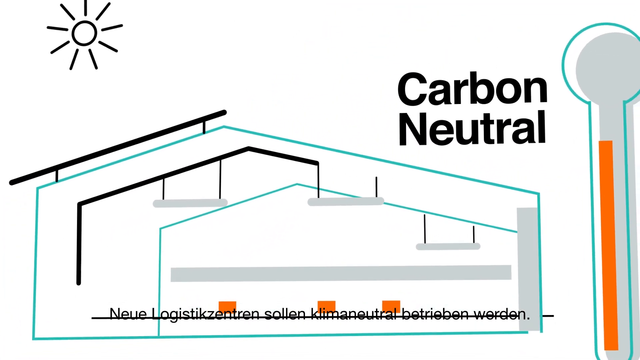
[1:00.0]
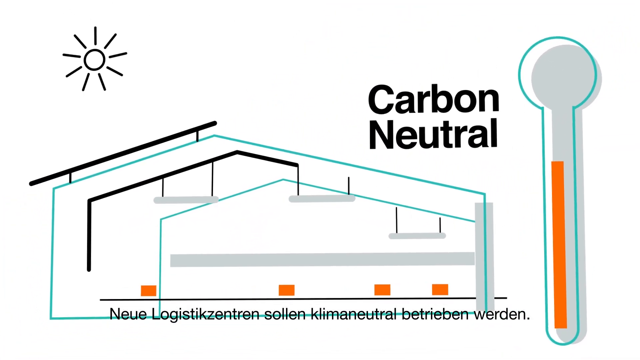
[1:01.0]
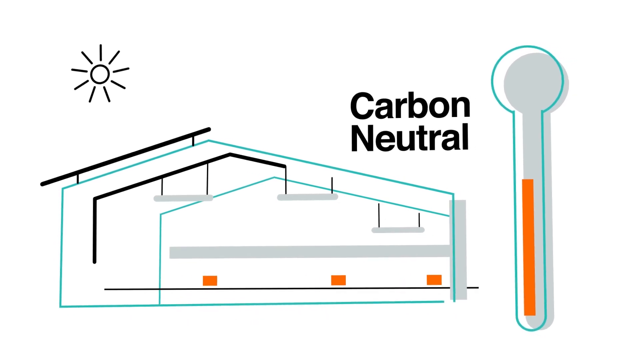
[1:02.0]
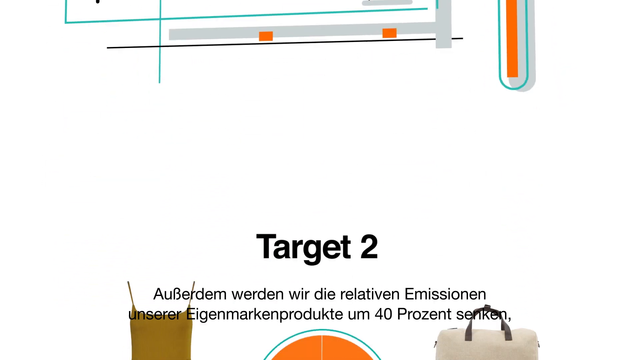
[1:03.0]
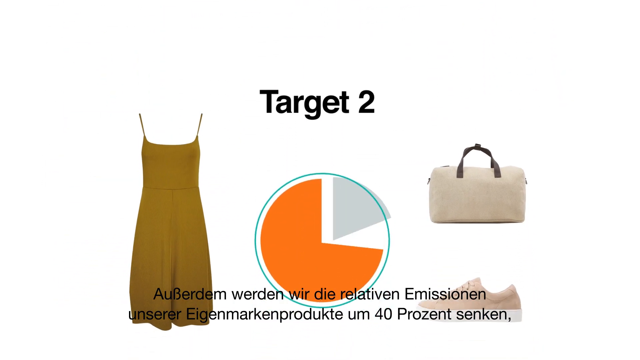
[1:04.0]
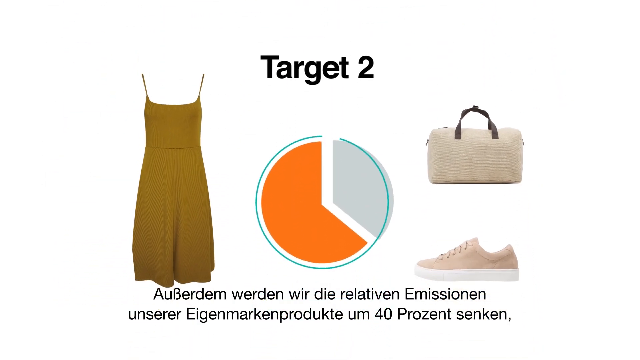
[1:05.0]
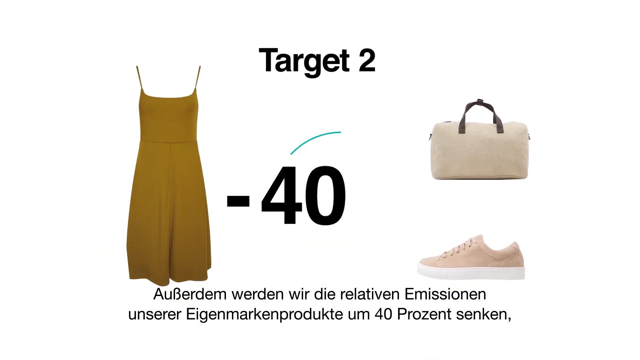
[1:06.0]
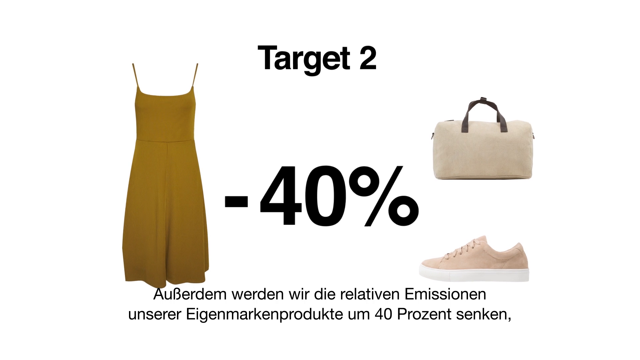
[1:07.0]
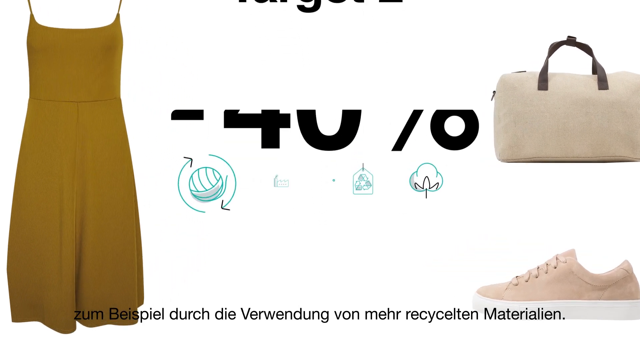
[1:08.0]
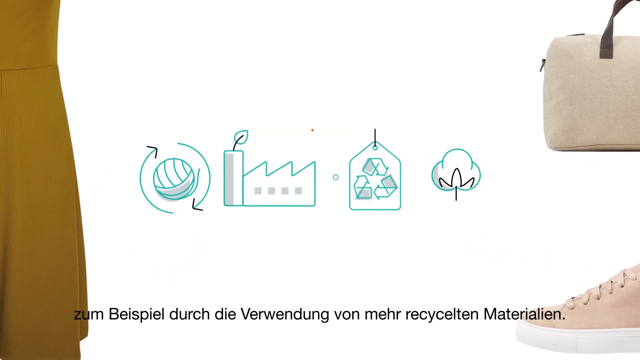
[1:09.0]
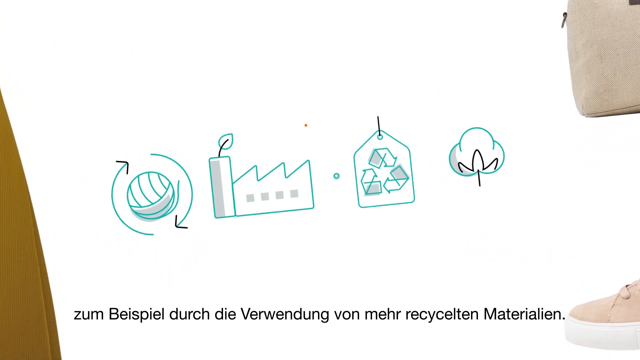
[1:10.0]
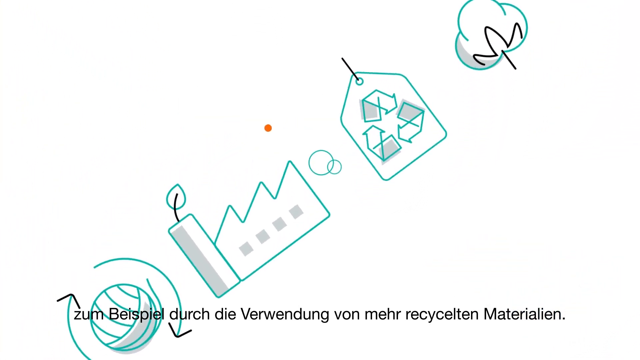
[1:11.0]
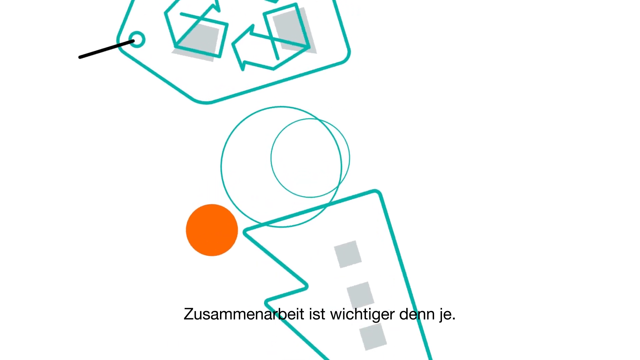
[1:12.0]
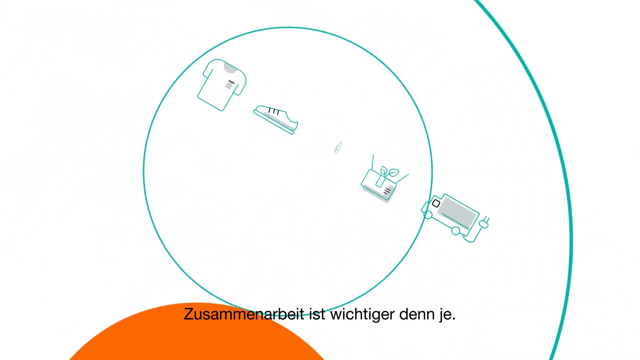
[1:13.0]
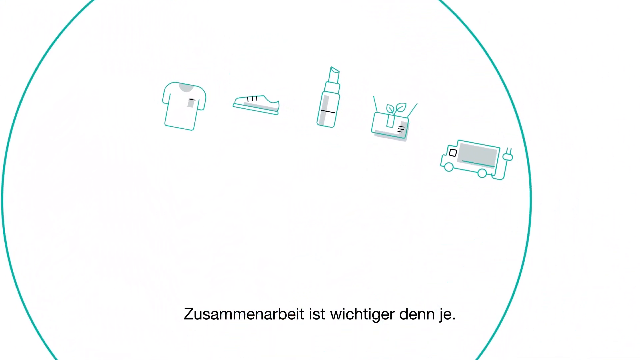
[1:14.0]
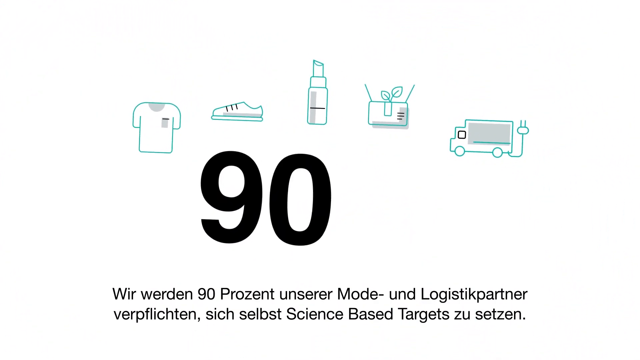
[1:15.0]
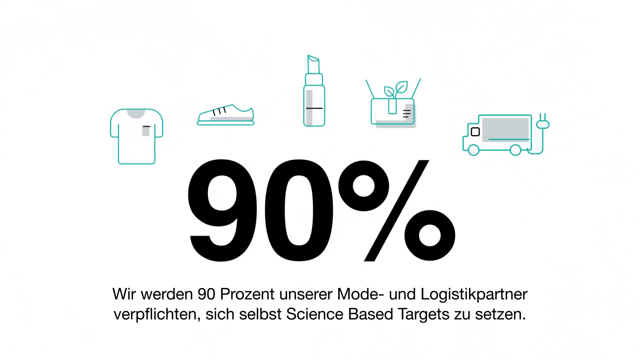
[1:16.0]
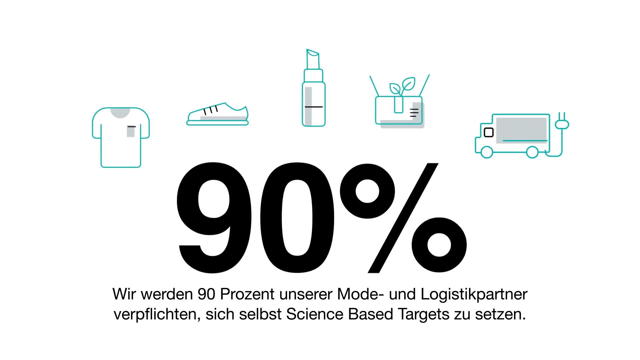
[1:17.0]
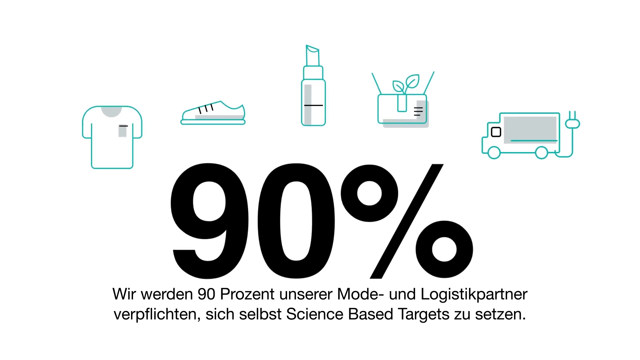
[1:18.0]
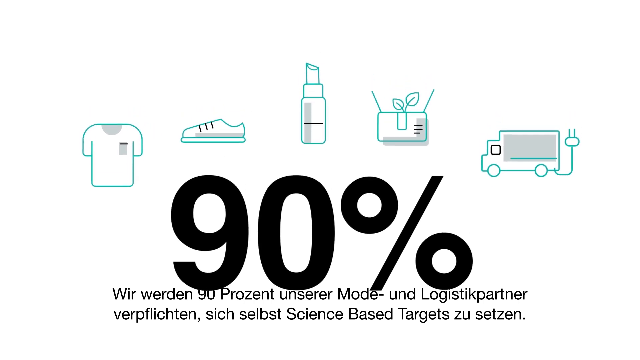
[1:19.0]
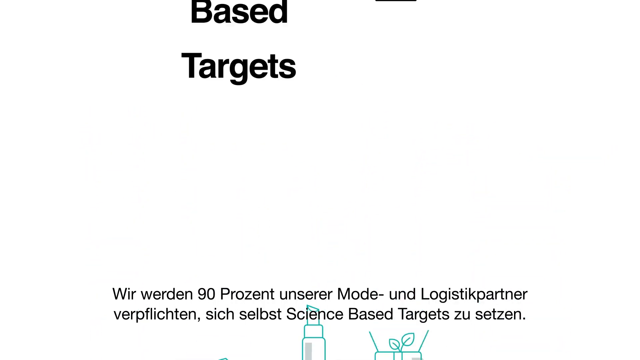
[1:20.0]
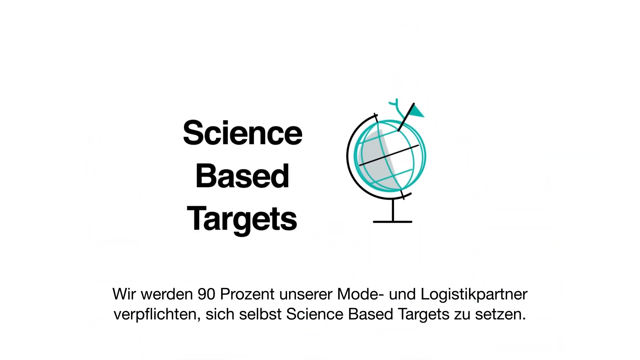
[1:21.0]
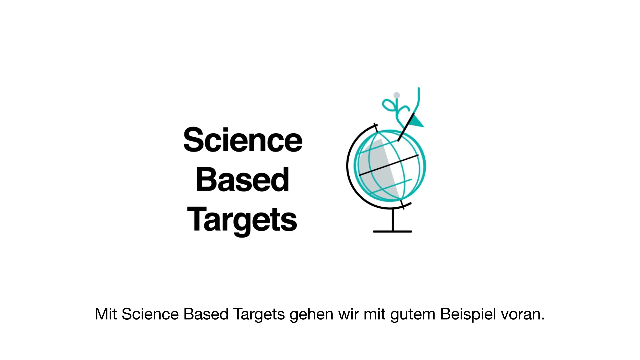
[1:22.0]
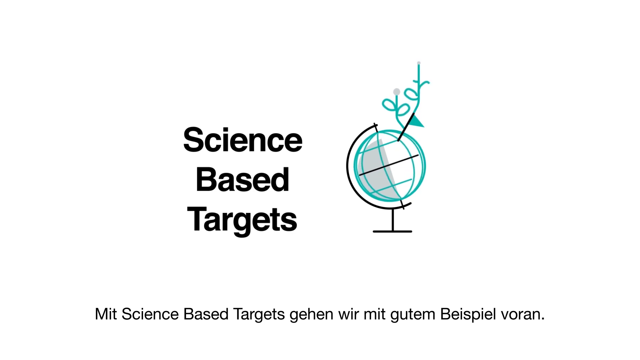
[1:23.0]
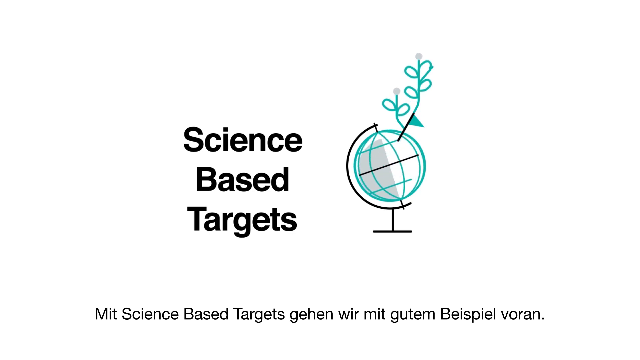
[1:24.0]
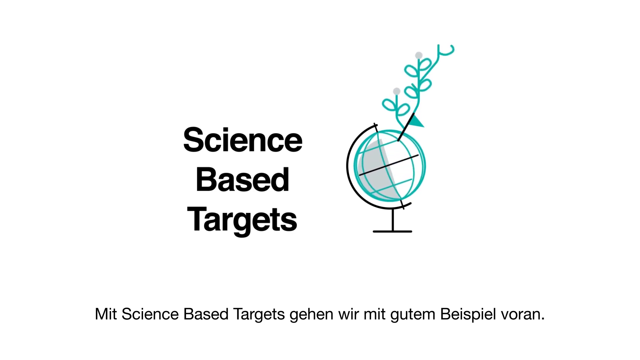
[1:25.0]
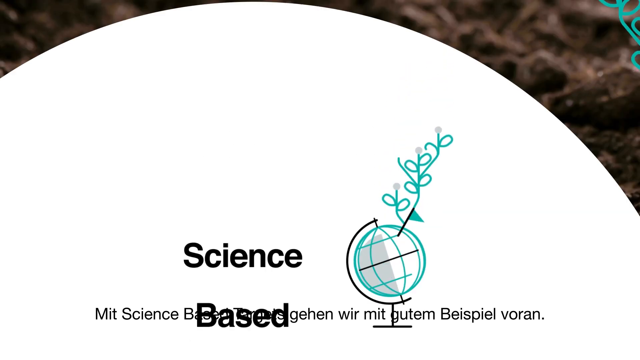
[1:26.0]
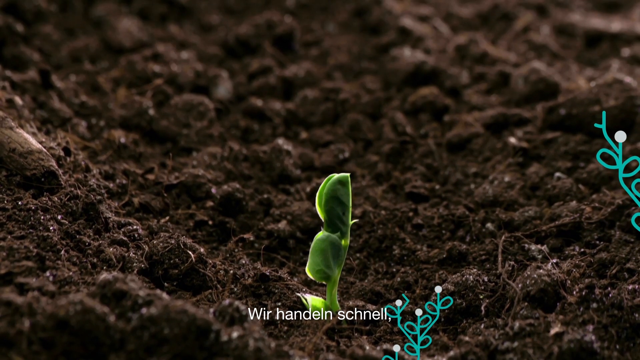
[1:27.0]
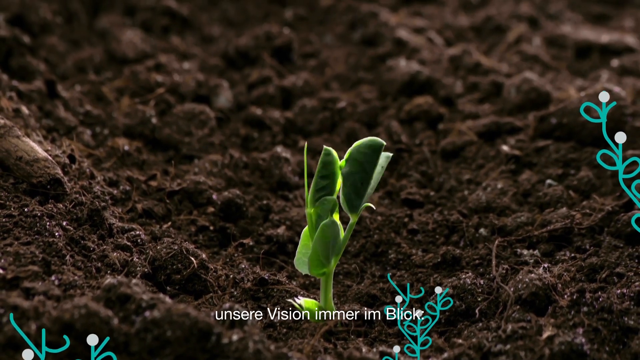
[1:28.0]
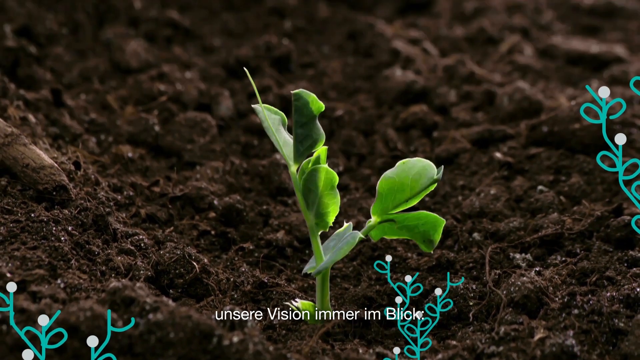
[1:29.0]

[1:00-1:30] Another screen shows a sort of infographic, animated-style presentation with information about becoming carbon neutral by using renewable energy sources, with target two apparently about cutting down on the materials used in creating material goods. A sort of infographic shows 90 percent of something, with text that is not in English on the screen. After a transition, a screen reads "science-based targets" with a sort of globe next to it that is kind of growing, with some leaves on it, and then a plant is shown growing in soil. No humans or animals appear.